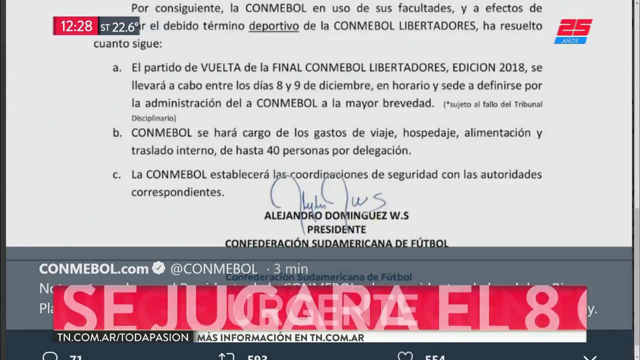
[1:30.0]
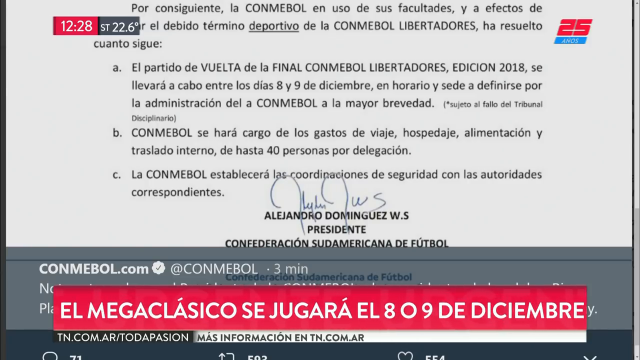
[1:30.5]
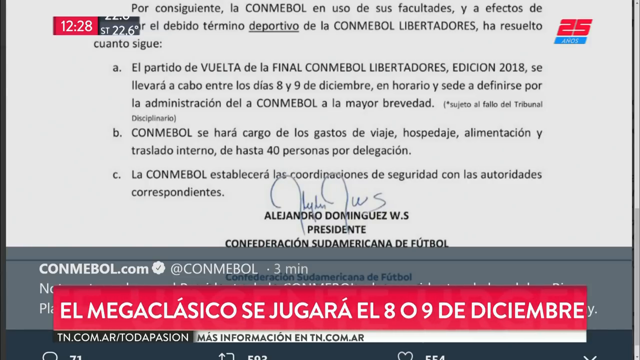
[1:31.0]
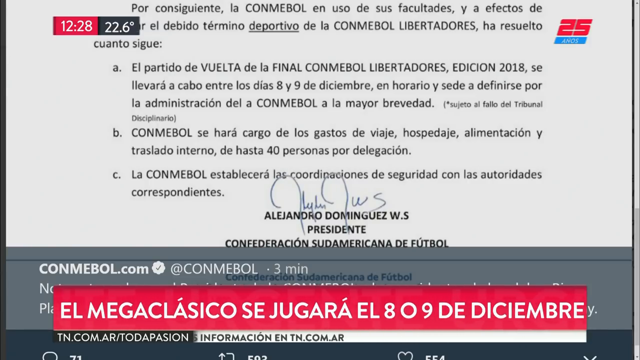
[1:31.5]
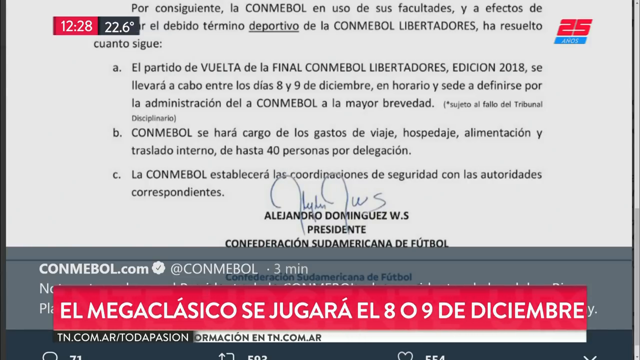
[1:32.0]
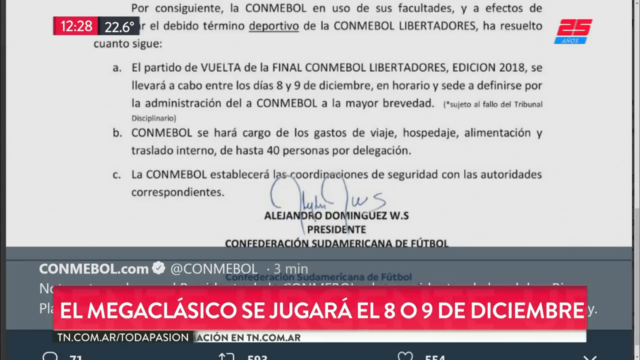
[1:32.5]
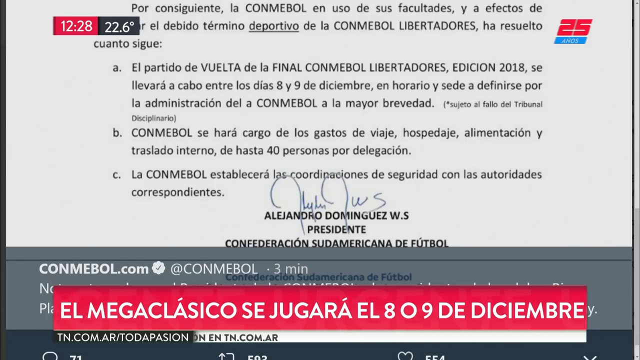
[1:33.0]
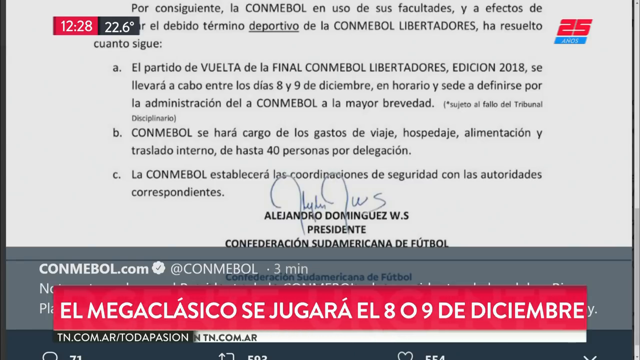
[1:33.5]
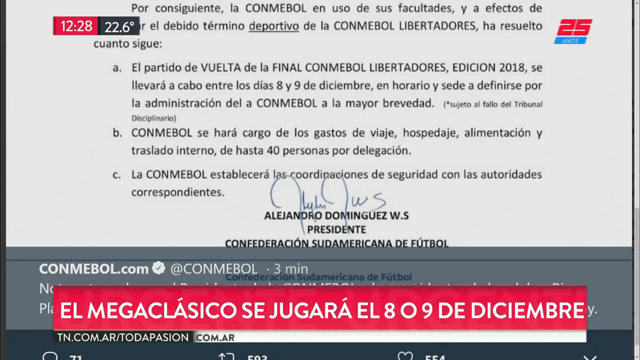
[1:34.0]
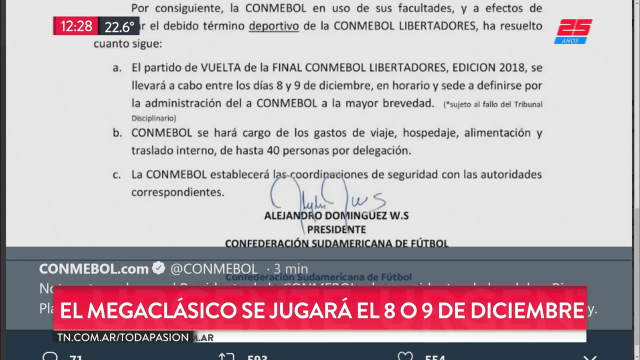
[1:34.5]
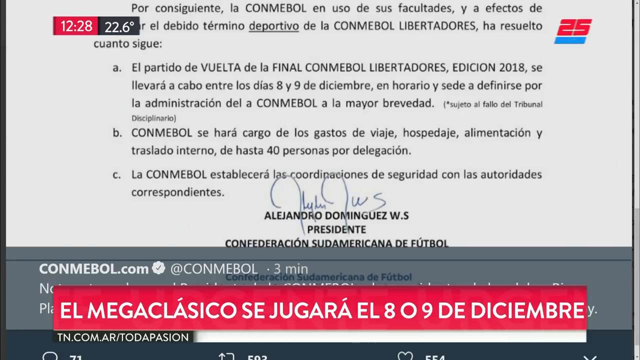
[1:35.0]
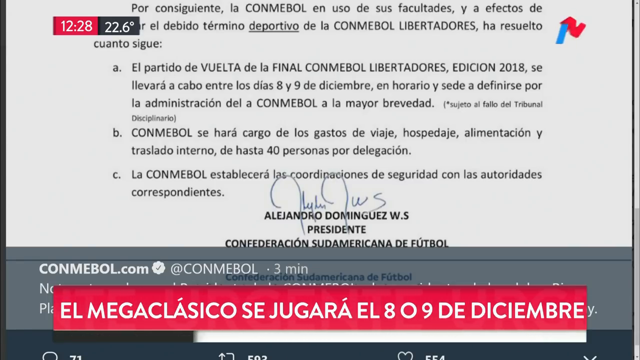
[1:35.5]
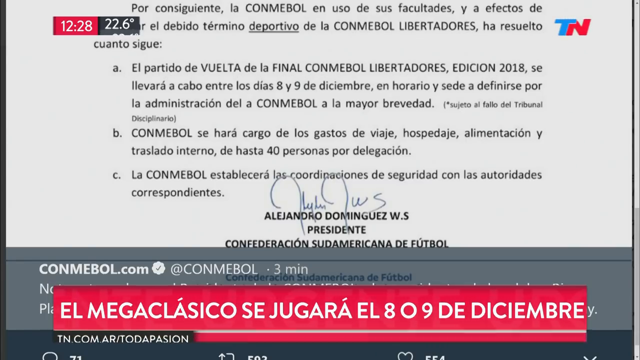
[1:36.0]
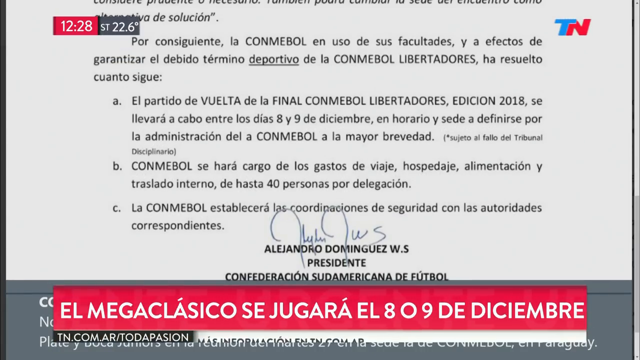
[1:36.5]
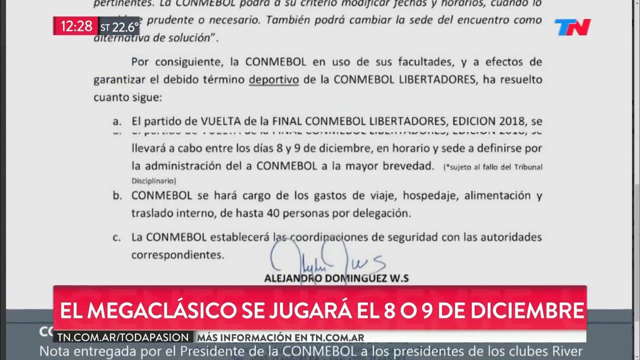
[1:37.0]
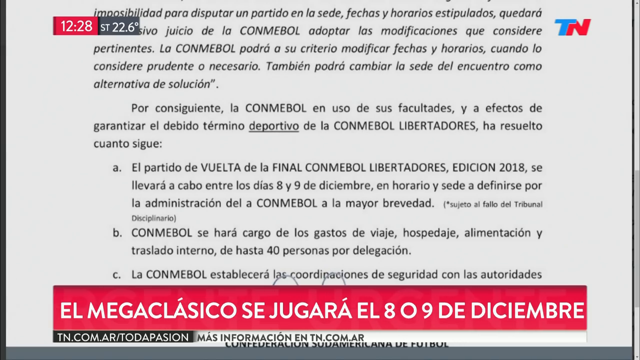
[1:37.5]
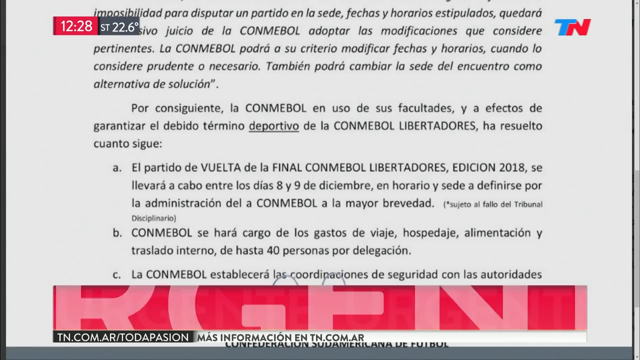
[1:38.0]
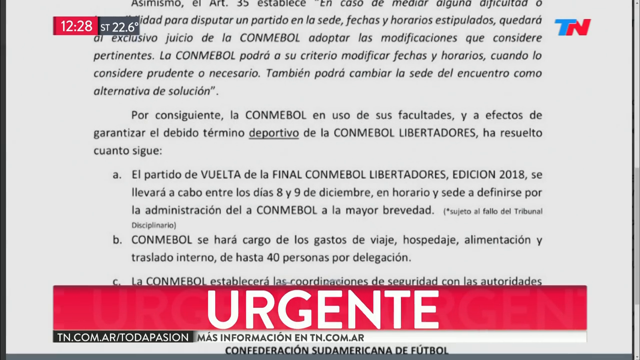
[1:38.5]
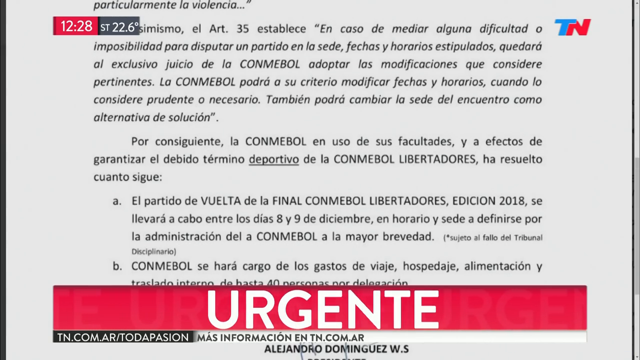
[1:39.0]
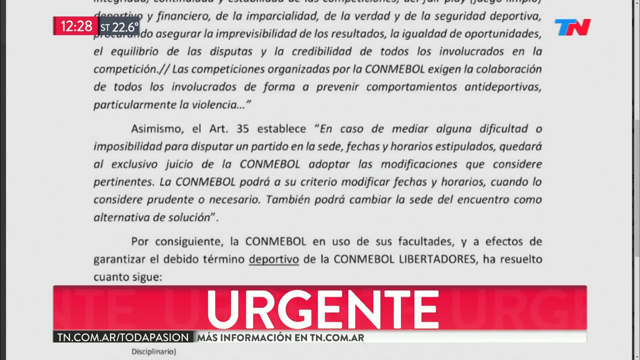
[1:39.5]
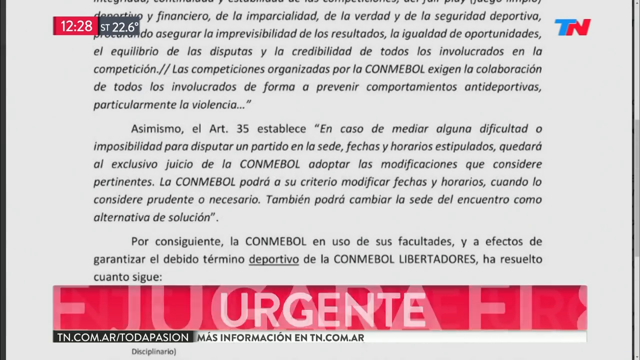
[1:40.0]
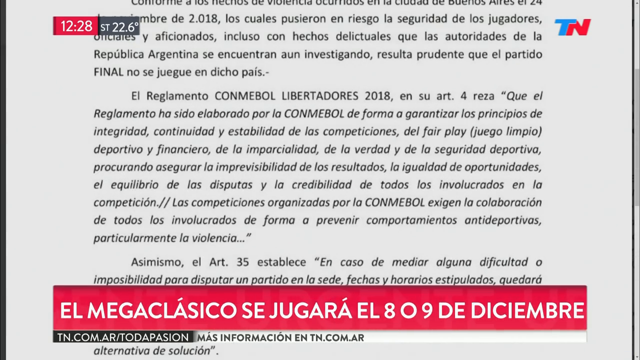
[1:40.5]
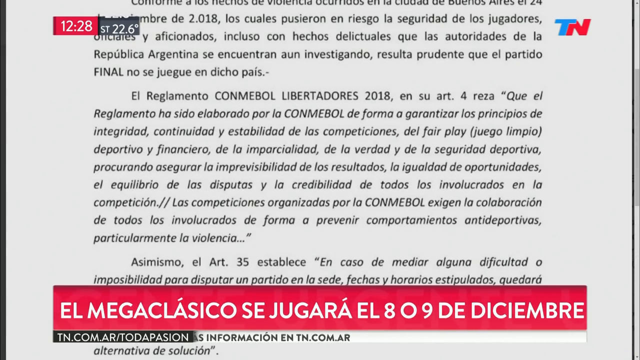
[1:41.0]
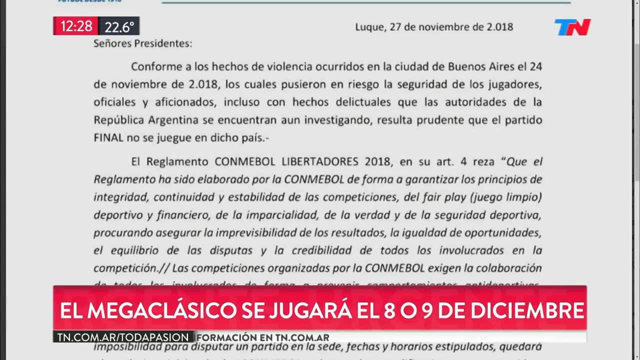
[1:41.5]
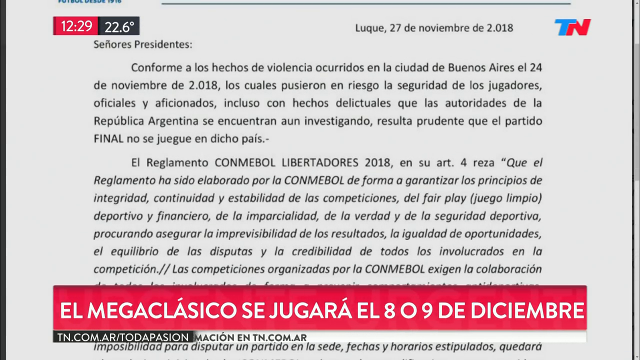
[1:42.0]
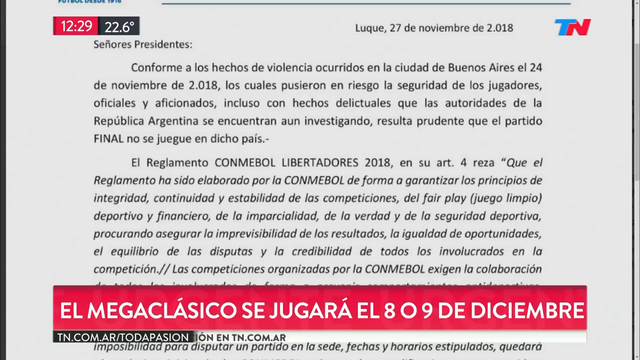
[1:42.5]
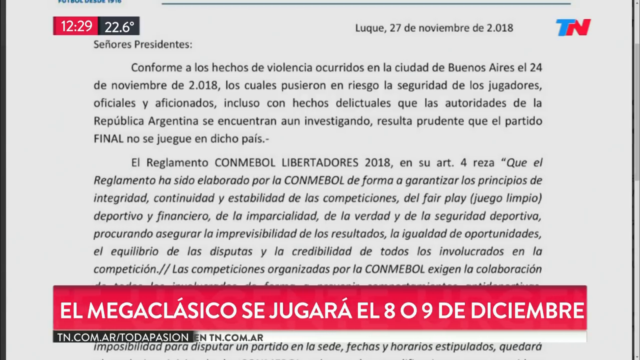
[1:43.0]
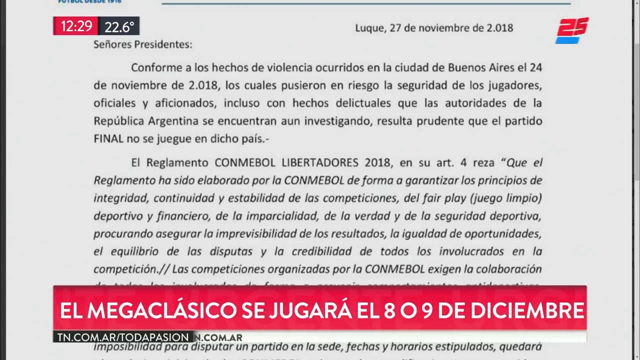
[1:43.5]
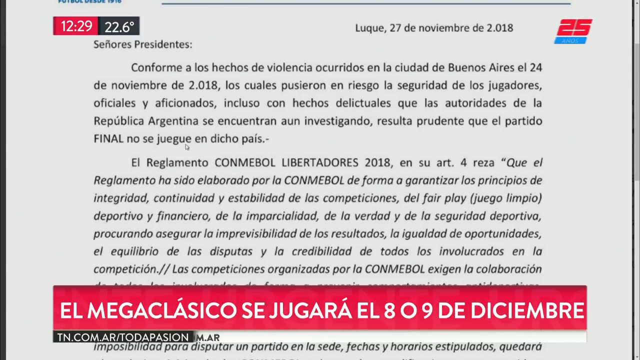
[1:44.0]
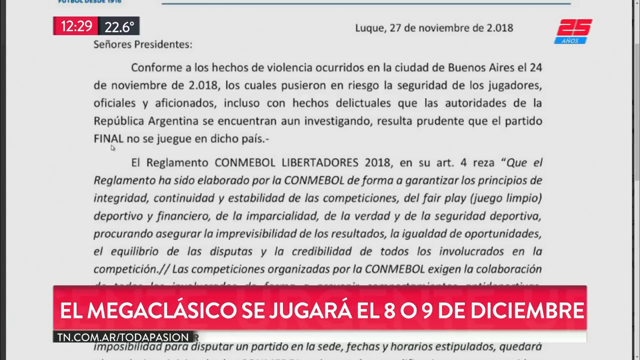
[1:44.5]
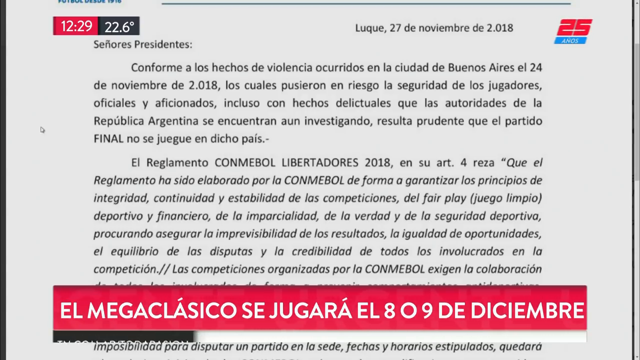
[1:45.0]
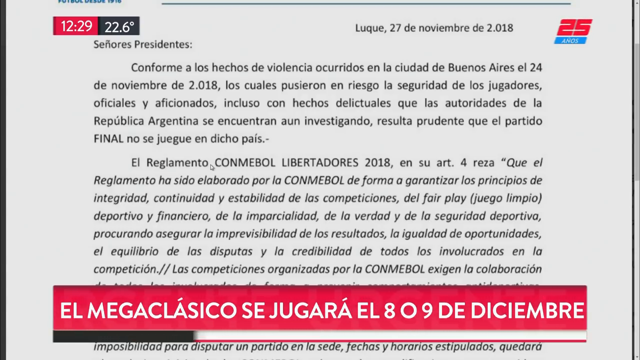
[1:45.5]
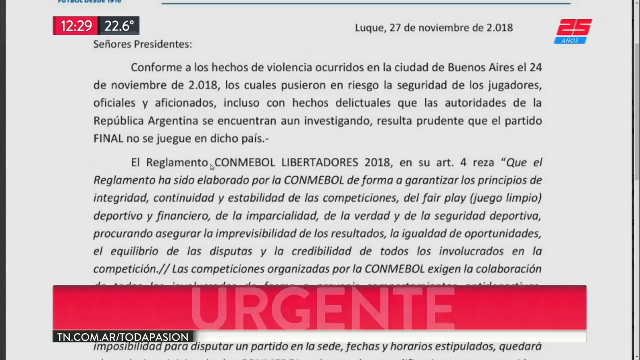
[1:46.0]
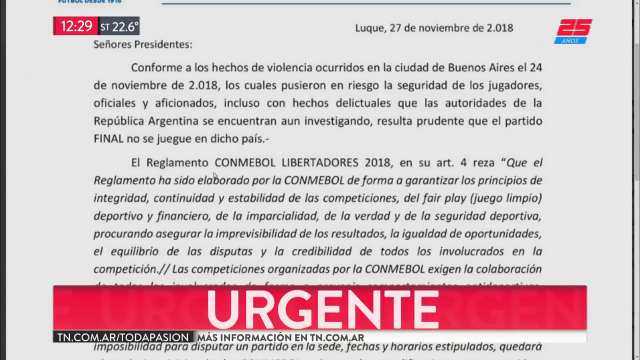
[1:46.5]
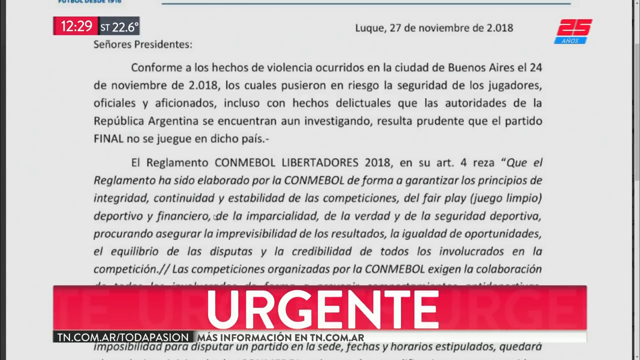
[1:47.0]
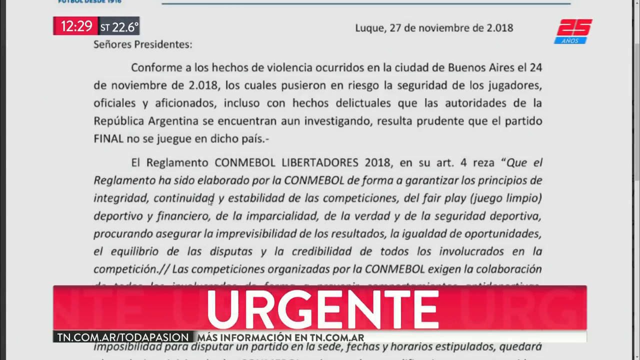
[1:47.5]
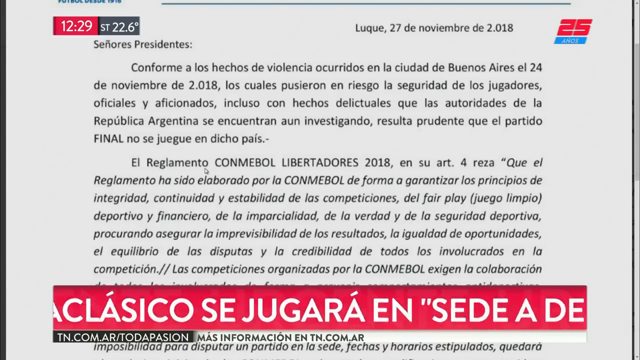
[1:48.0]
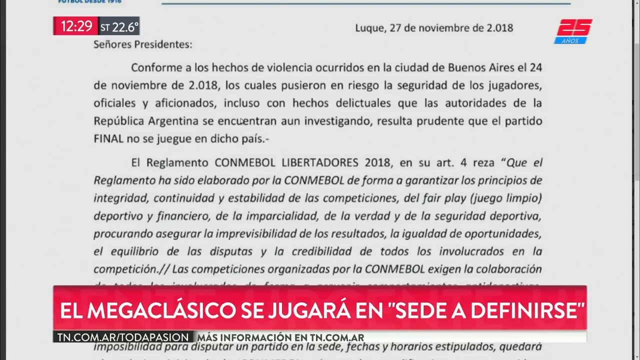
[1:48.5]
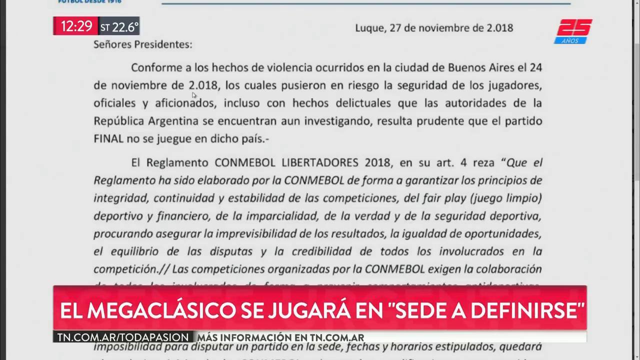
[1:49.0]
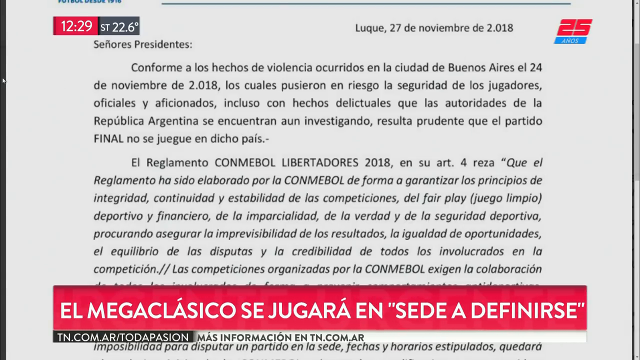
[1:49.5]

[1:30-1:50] What appears to be a news screen shows the time "12:28" in the top left and a document with black text on a white background in a foreign language, with a signature that looks hand-drawn toward the bottom. Below it is a red banner with continuously changing white text, and below that a white banner with moving black text. The screen scrolls up slightly and keeps scrolling until it reaches what appears to be the very top of the page. A mouse cursor appears and goes to the left of the screen, then a little more to the right over the text, moves back and forth across the page, goes lower, goes to the far left, and then goes to the top.